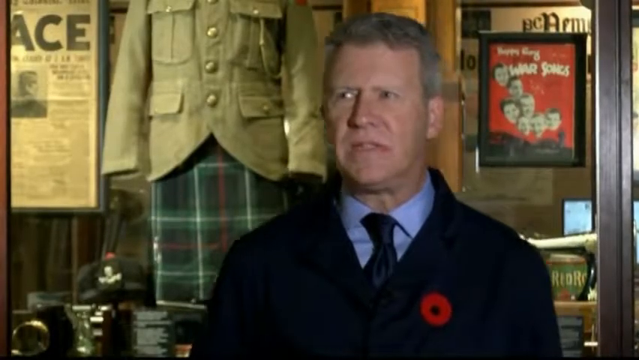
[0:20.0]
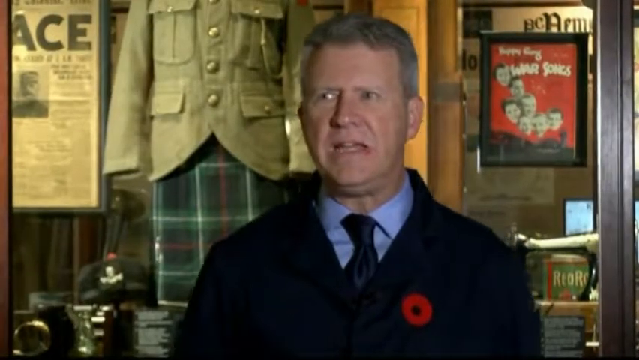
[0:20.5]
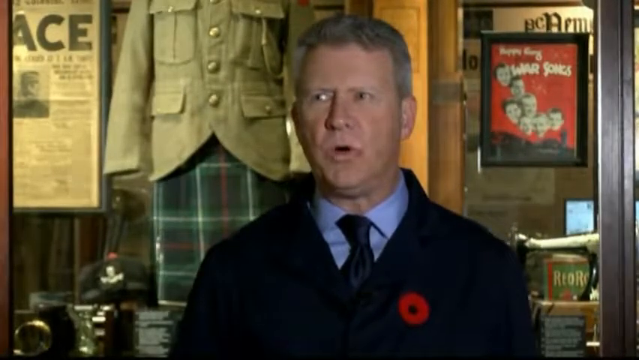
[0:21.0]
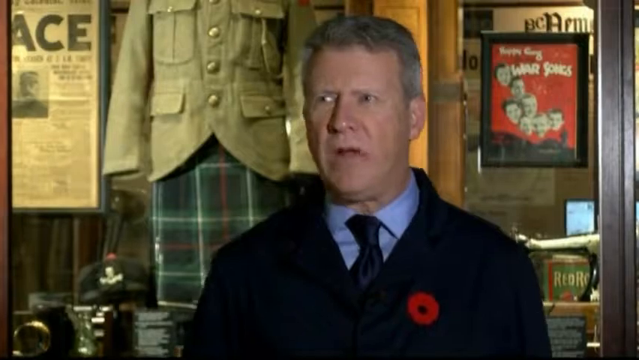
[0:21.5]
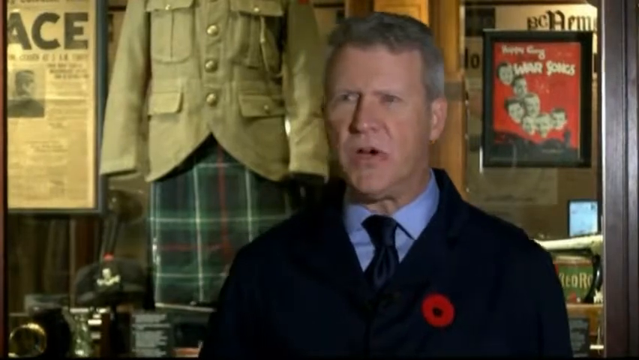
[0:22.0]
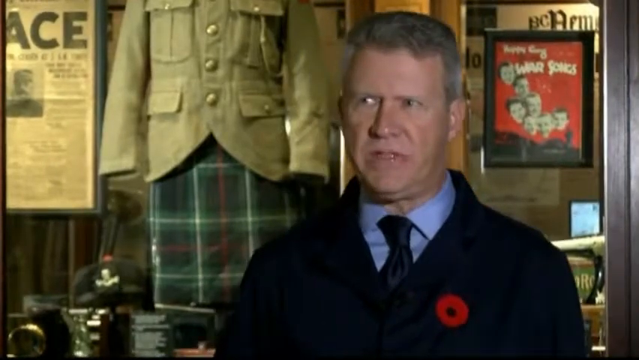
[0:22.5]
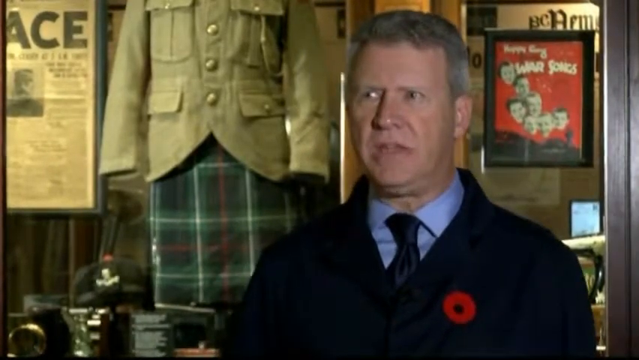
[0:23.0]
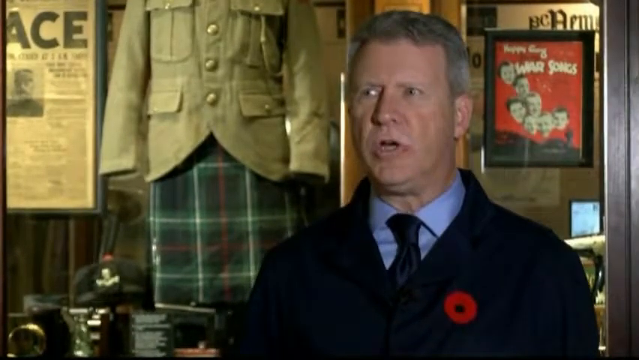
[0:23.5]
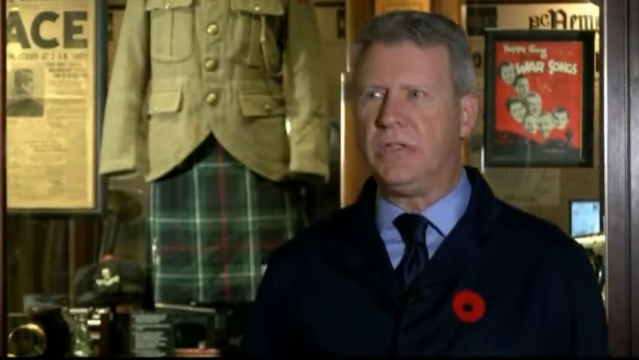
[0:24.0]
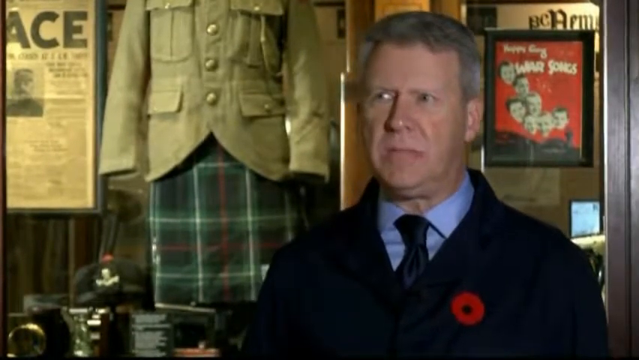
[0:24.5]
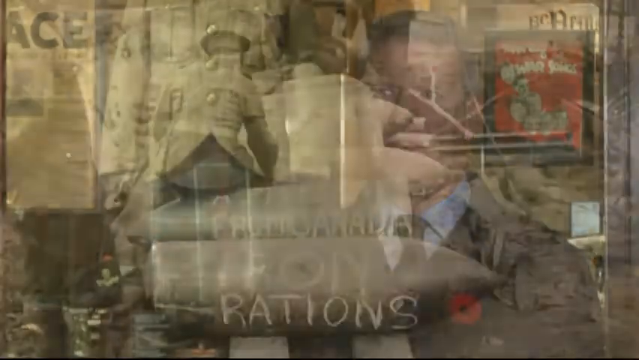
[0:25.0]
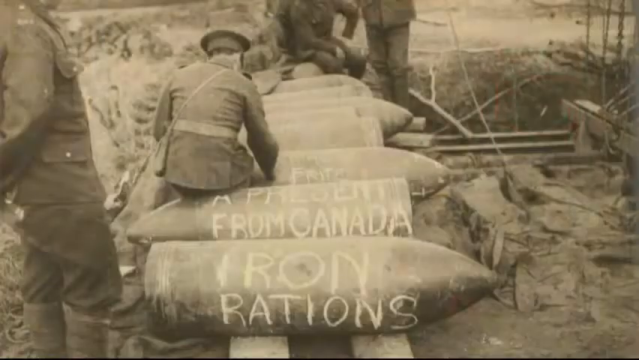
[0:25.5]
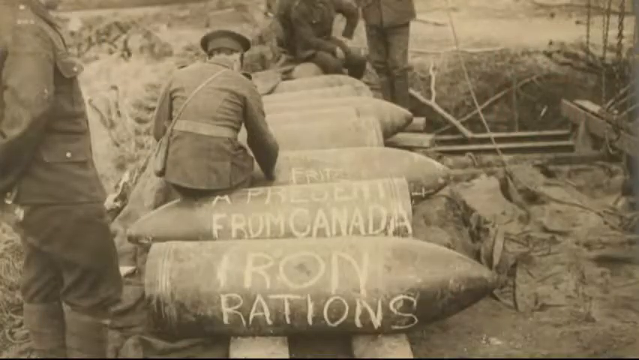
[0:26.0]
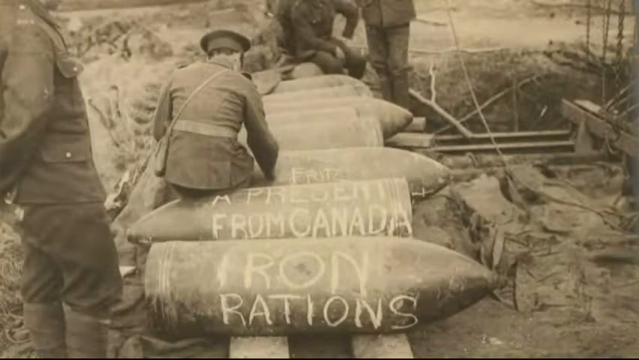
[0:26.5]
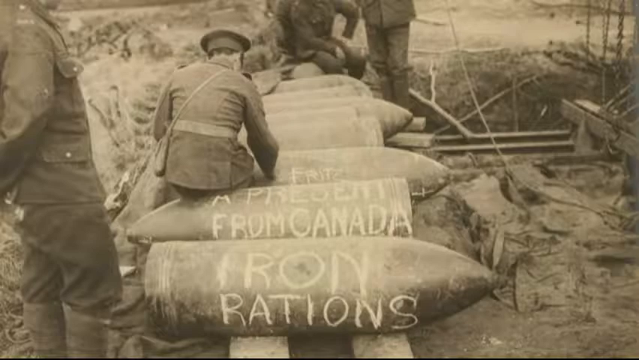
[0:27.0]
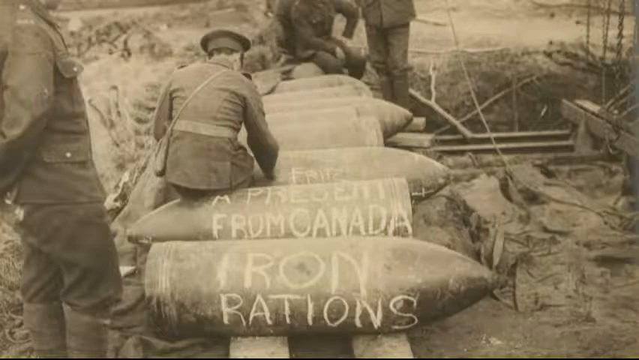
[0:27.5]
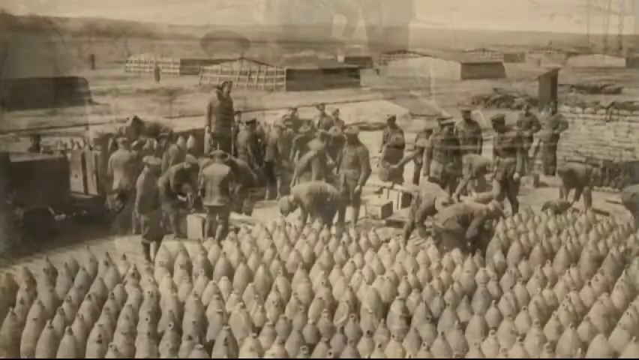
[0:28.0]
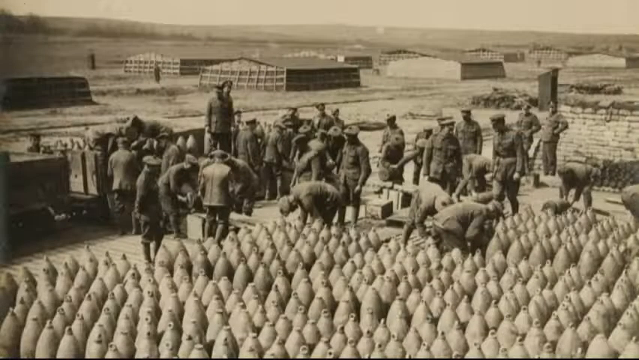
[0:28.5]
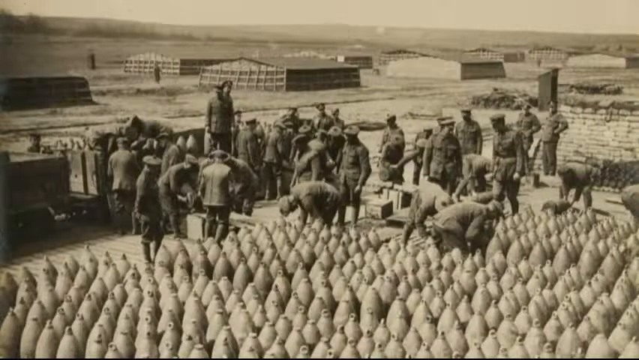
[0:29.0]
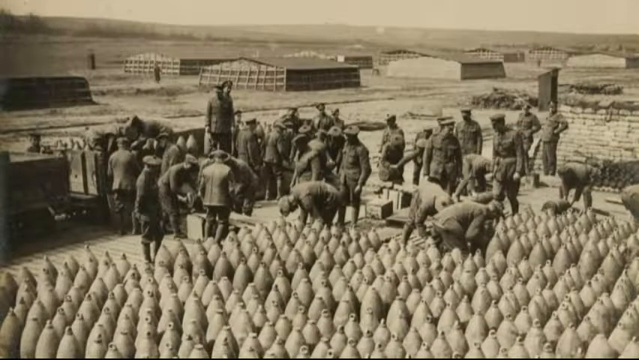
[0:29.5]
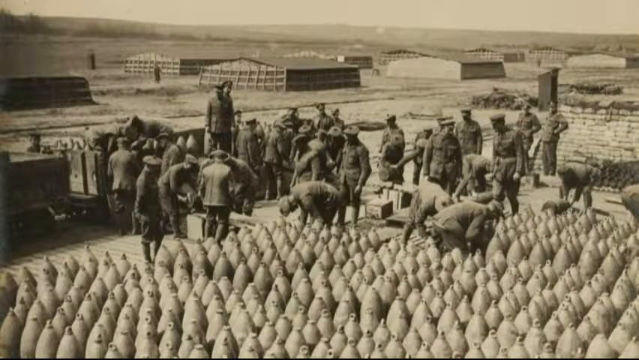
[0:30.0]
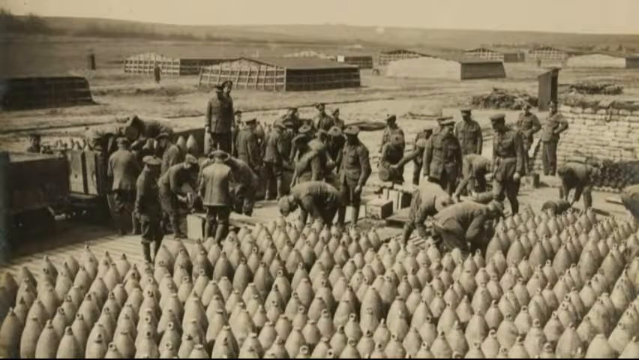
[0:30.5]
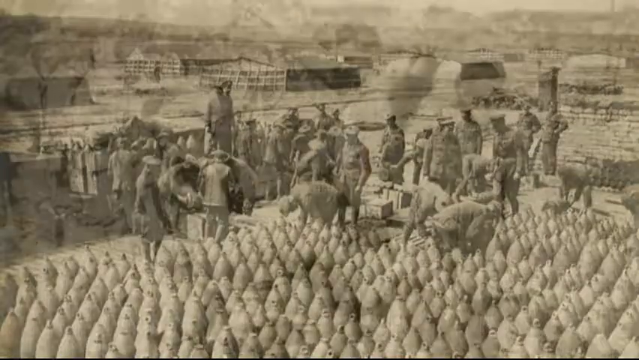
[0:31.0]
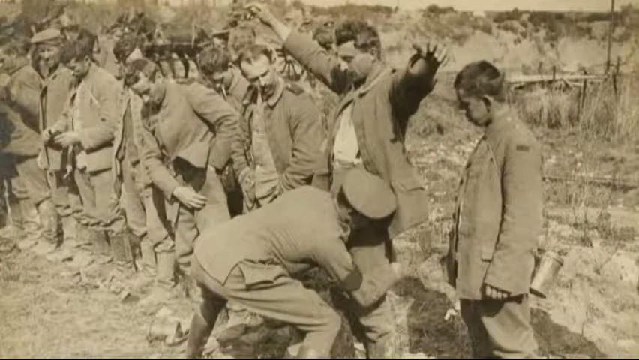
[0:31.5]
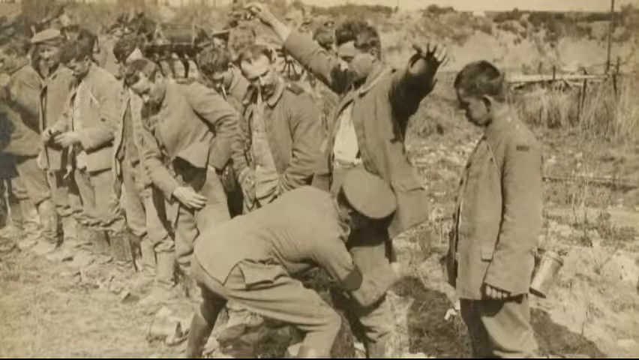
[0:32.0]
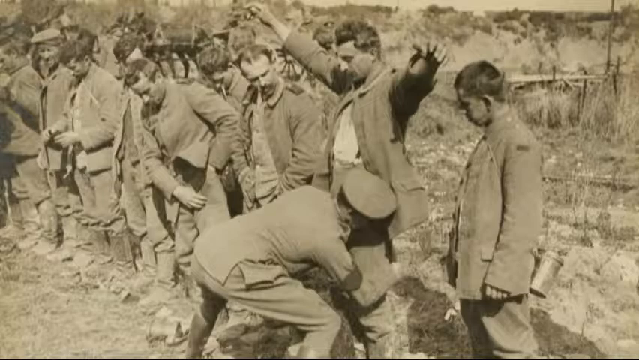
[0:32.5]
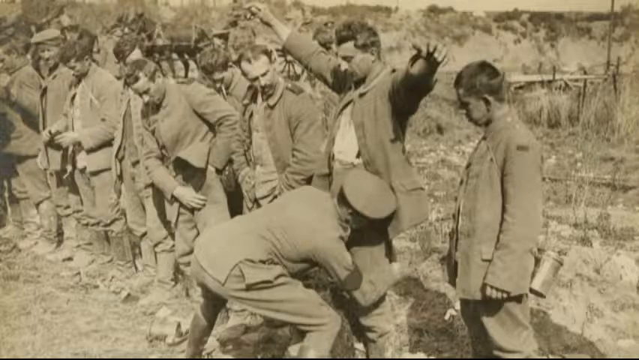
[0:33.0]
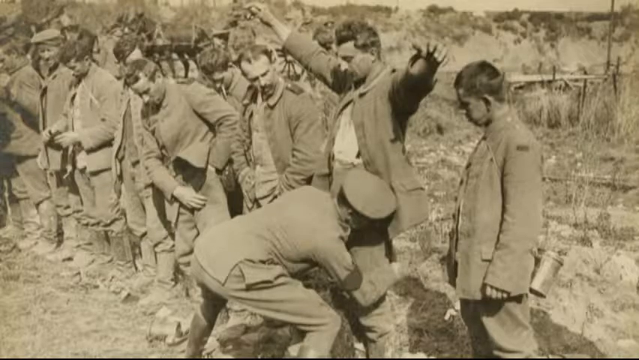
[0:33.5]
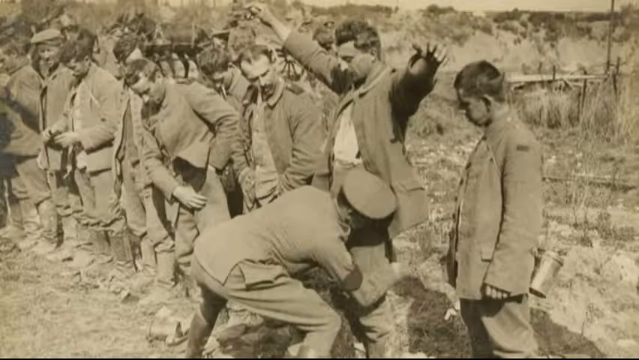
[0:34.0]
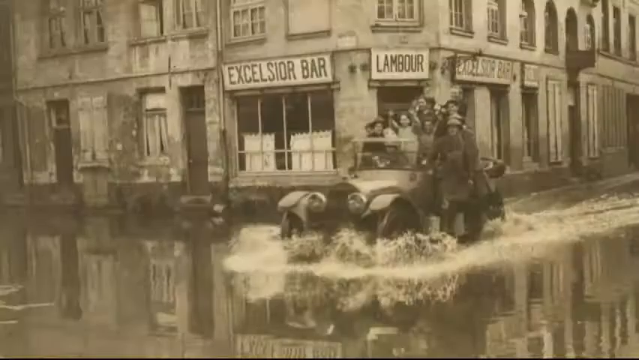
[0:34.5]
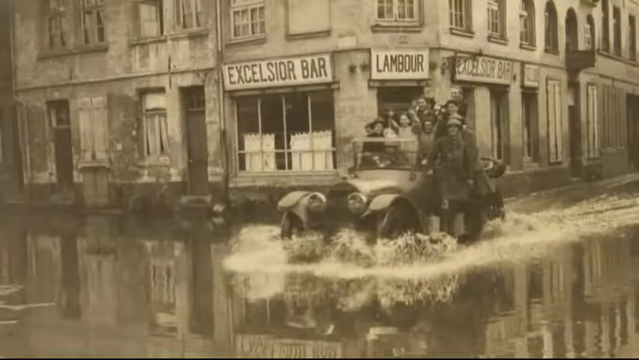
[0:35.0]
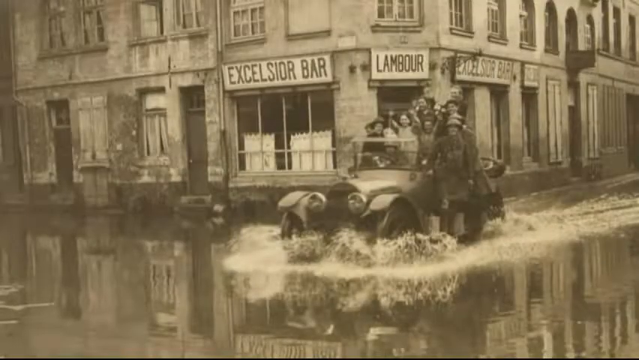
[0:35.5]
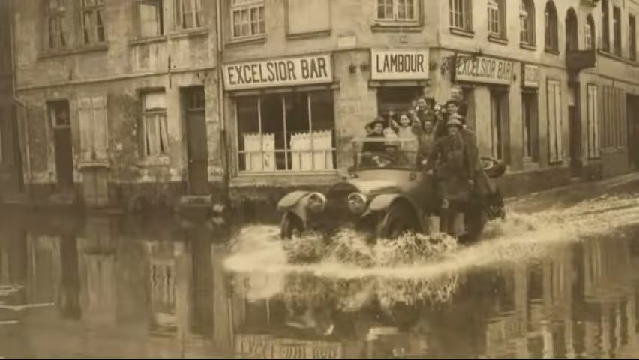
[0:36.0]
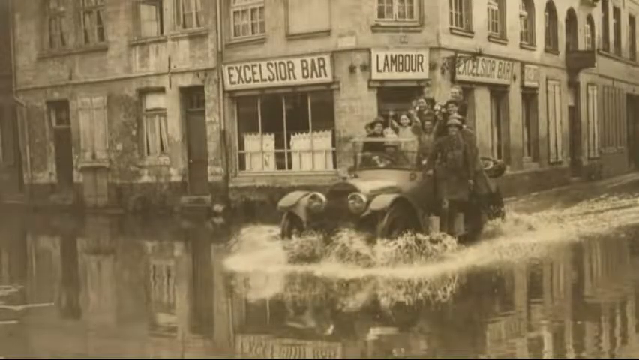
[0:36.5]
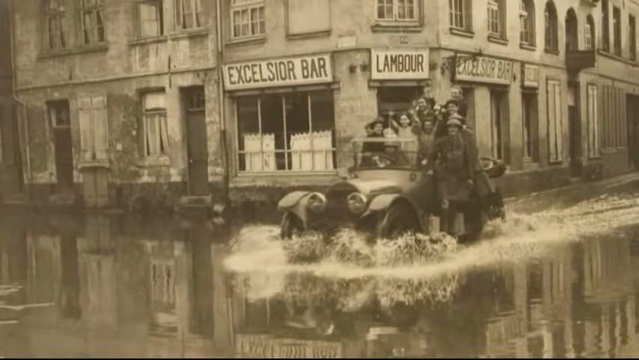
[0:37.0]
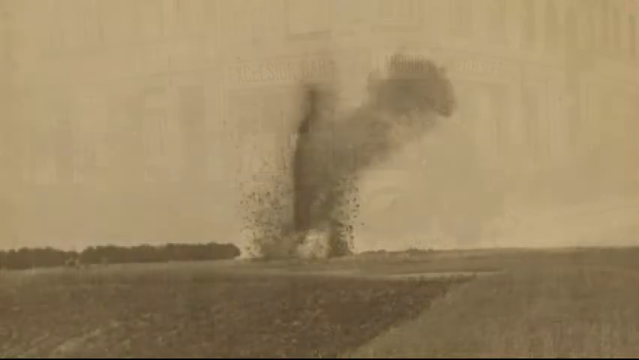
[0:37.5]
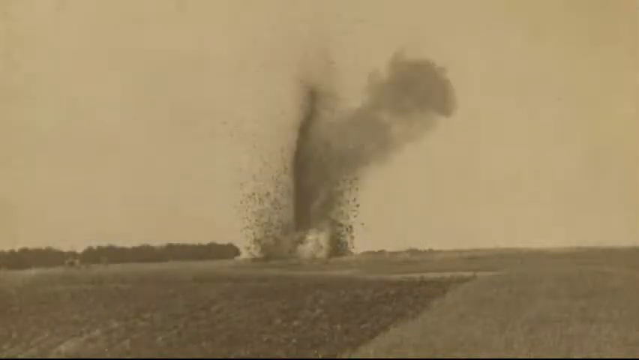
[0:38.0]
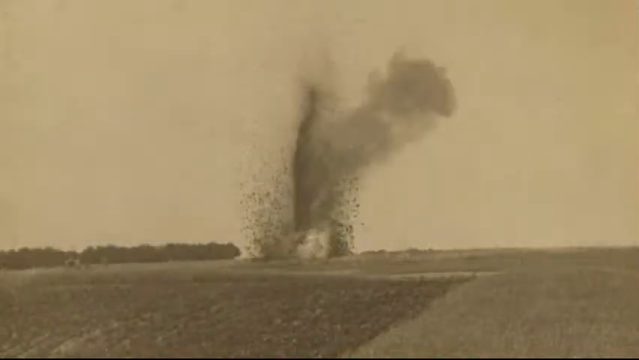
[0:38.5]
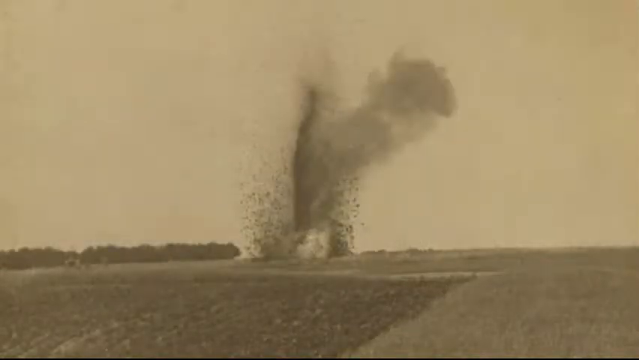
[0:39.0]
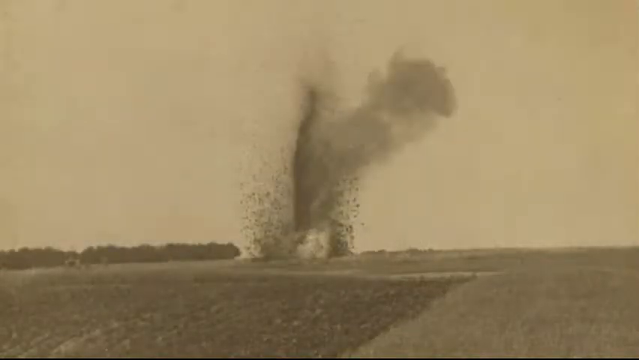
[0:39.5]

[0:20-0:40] A man stands speaking directly into the camera. He wears a blue collared button-up shirt, a dark blue tie and a black jacket over it. Behind him, over his right shoulder, is a glass case containing a uniform with a green military jacket and a green, white and red striped kilt. A black-and-white picture then shows a row of bombs with writing on them: the first says "Iron Patrons" and the second says "a present from Canada", followed by six more lined up whose writing cannot be made out. A person sits on the one that says "a present from Canada", seen only from the back, and a dirt hole surrounds it. Another picture shows a bunch of missiles standing straight up with a group of men in military uniforms standing in front of them and buildings set up in the background.